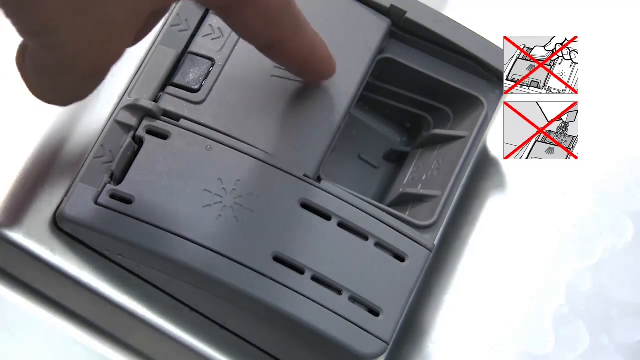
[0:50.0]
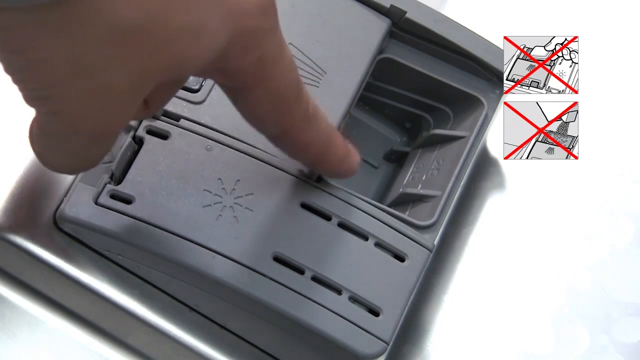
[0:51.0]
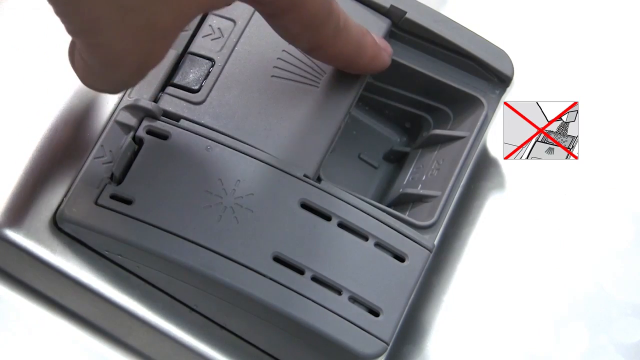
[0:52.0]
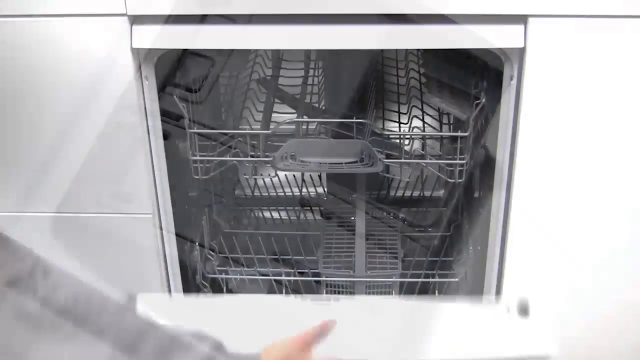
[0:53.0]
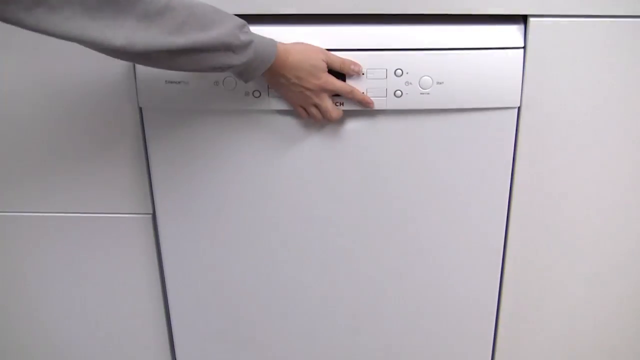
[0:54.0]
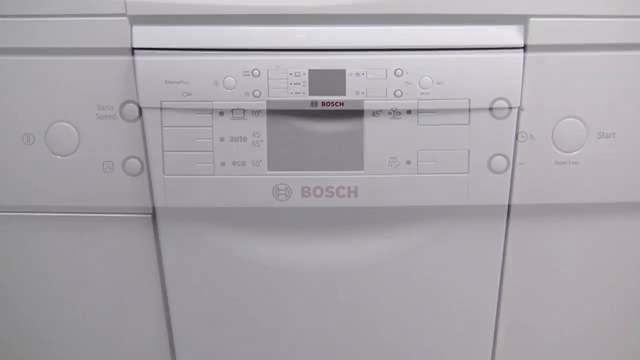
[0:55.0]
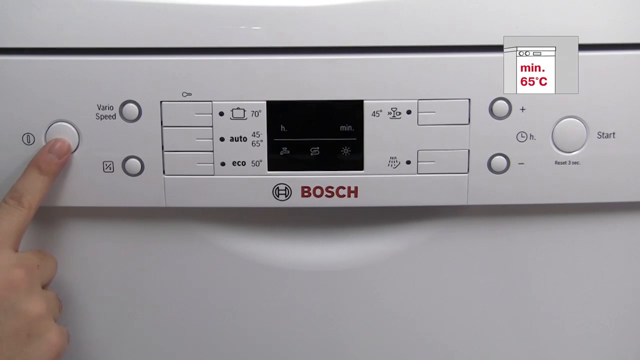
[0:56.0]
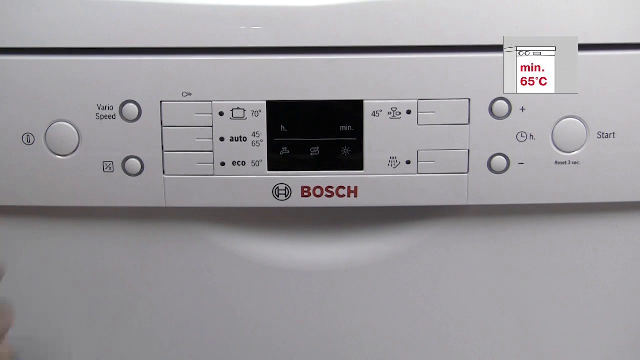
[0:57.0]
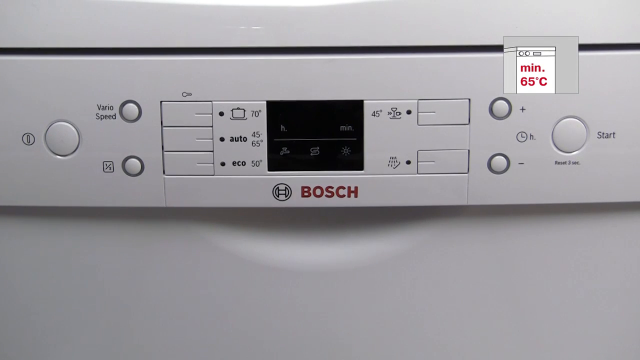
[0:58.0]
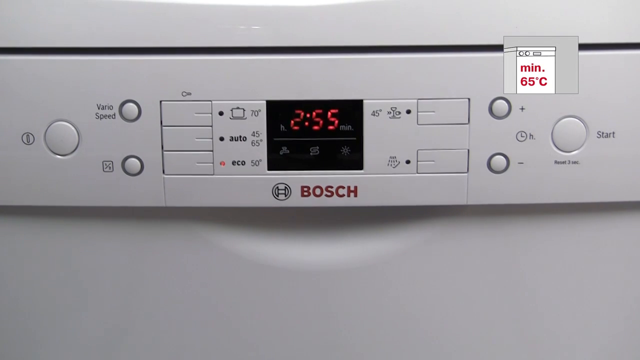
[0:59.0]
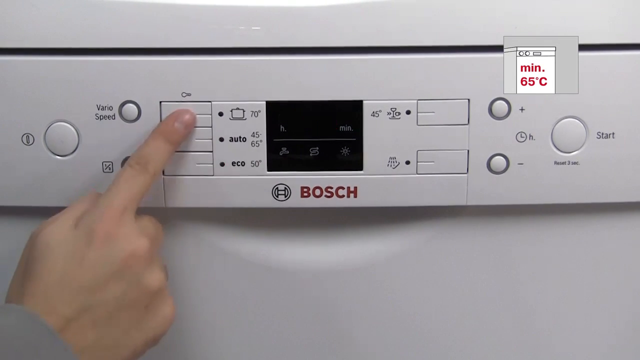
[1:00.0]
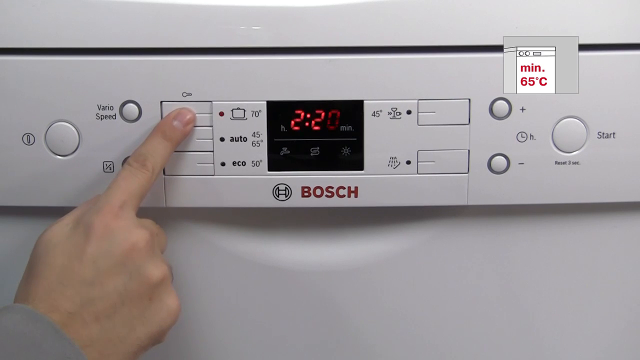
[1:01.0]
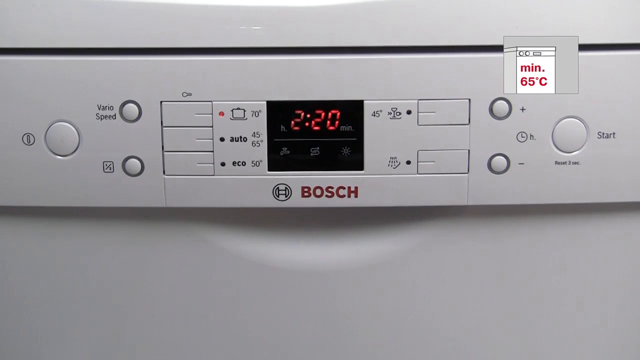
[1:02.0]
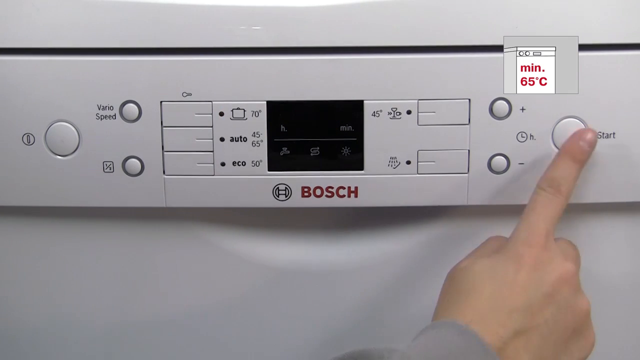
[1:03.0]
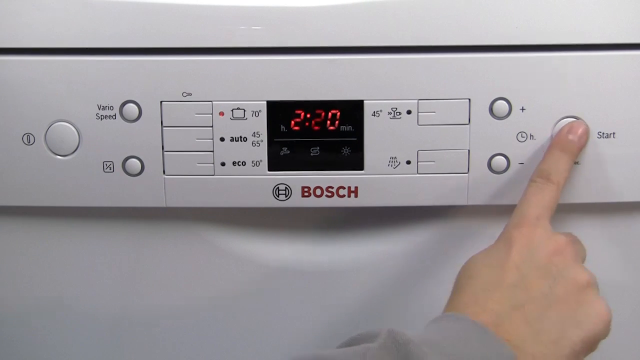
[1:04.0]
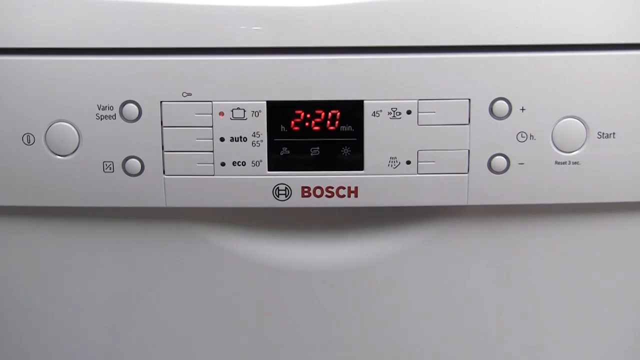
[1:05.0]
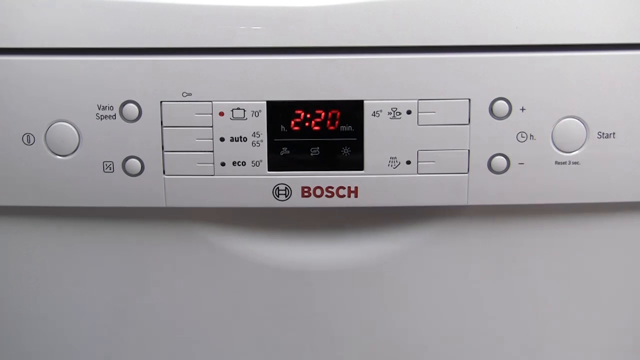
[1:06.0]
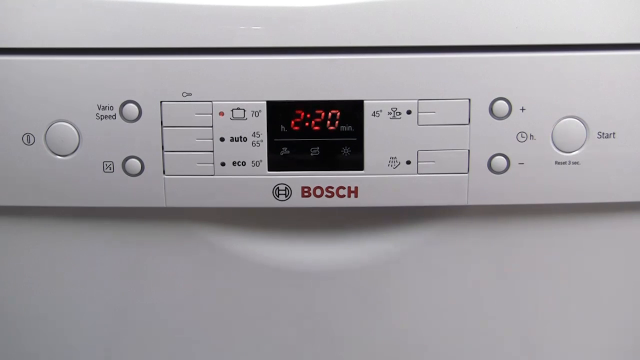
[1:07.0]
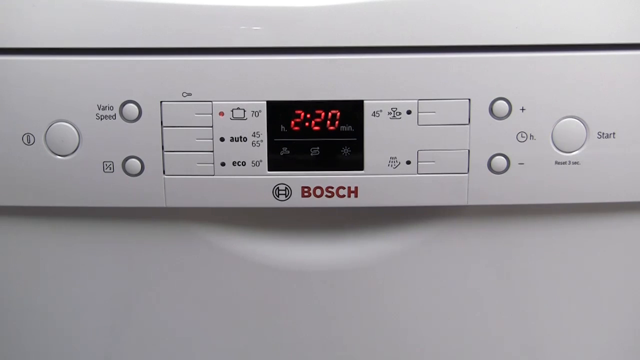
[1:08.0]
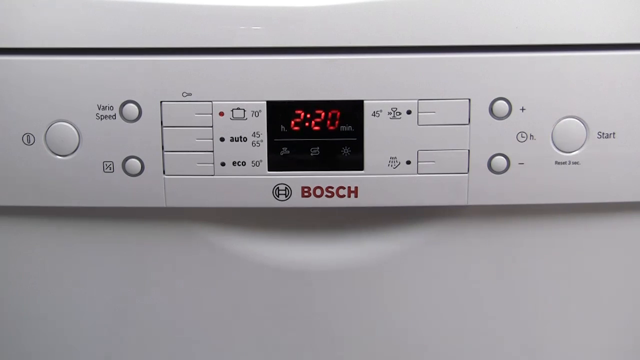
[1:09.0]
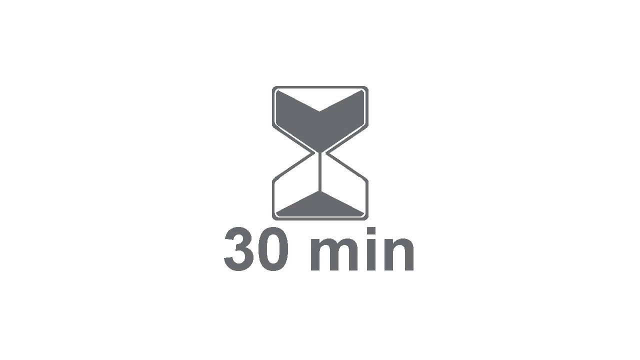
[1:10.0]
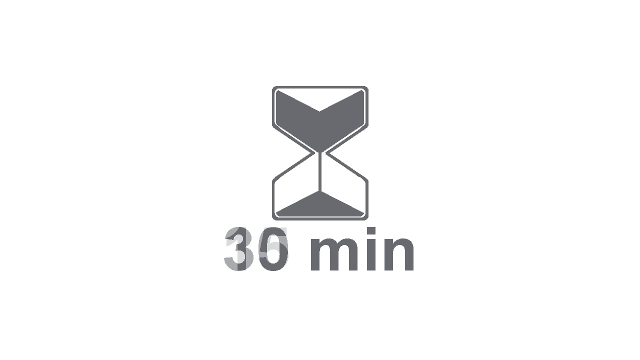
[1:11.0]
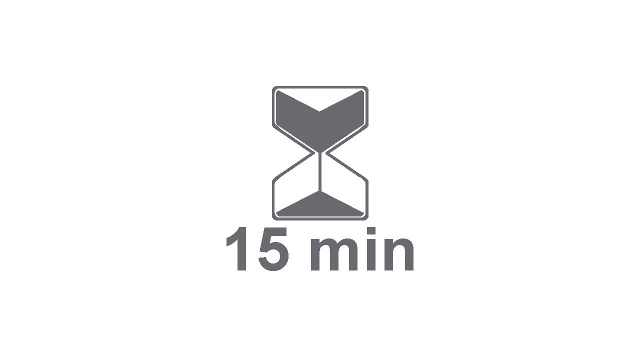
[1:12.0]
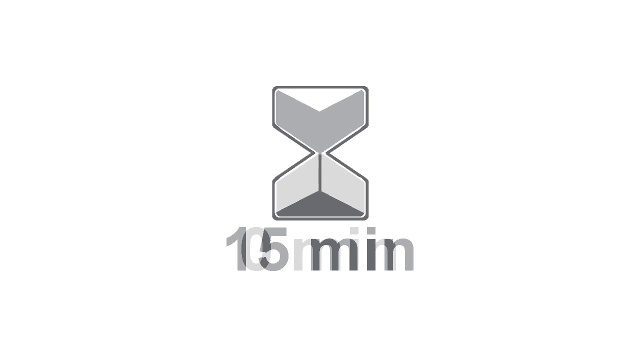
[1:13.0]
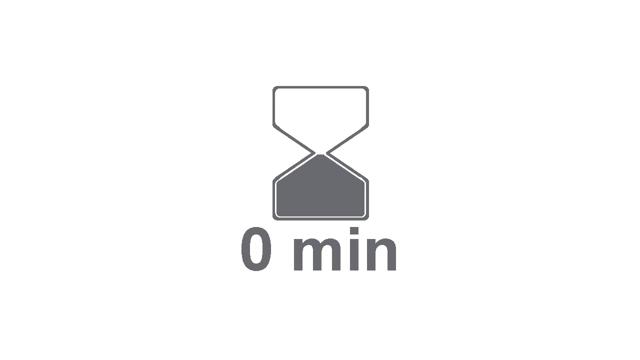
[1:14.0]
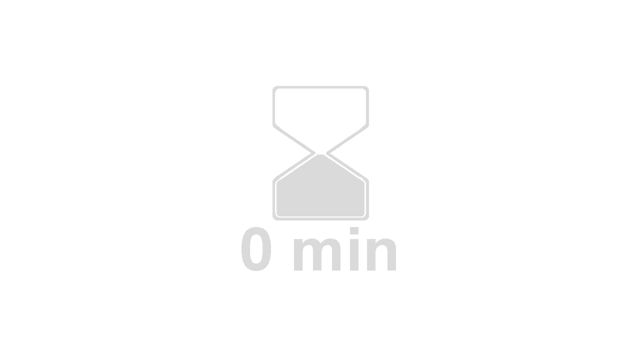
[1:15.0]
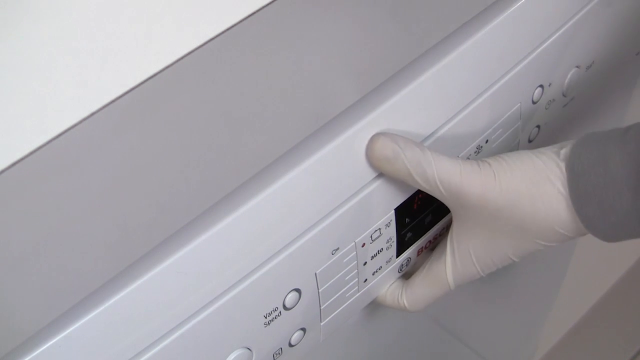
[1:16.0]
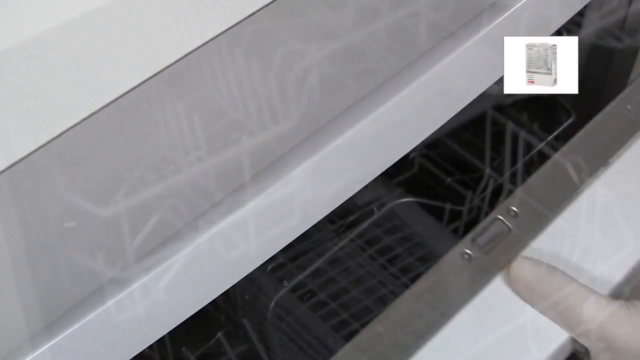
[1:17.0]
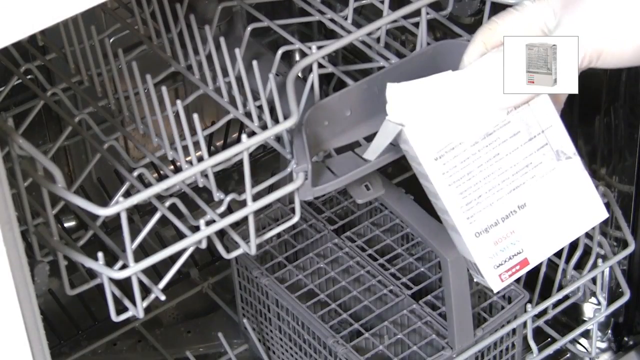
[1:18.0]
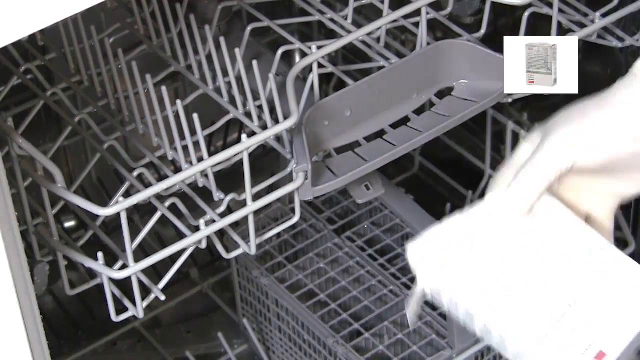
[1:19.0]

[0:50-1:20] The person uses their index finger to point at the lid of the dishwashing compartment, and the two icons on the right disappear, first one and then the other. The view returns to the dishwasher, and the door is closed with the right hand. A close-up of the dishwasher's buttons follows: the right index finger presses the power button, and the LED screen in the middle shows 255. They press a button on the left panel, then a start button on the far right, and the number 220 appears on the LED panel. A white screen then shows an hourglass symbol with "30 minutes" in grey below it, which changes to "15 minutes" as the hourglass animates, until the time reaches 0 minutes and the bottom of the hourglass is completely filled. The dishwasher is then opened, seen from a top perspective, by a left hand in a white glove. In the right hand the person holds a box that is open at the side, and they shake it inside the dishwasher so that its contents sprinkle inside.